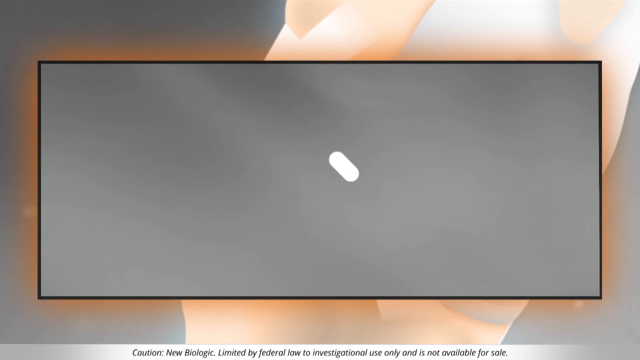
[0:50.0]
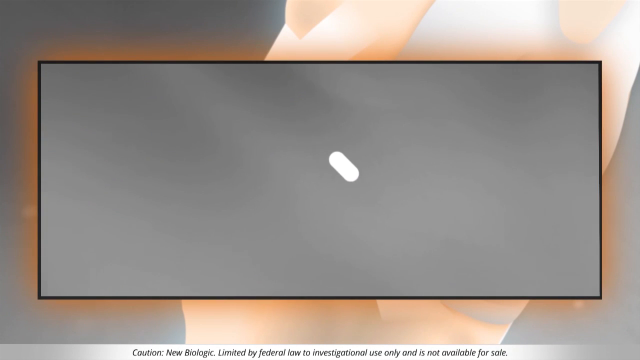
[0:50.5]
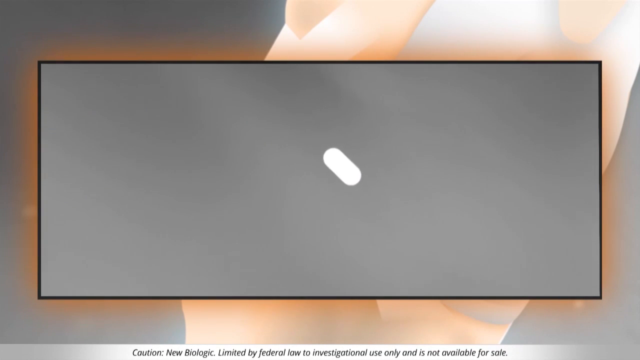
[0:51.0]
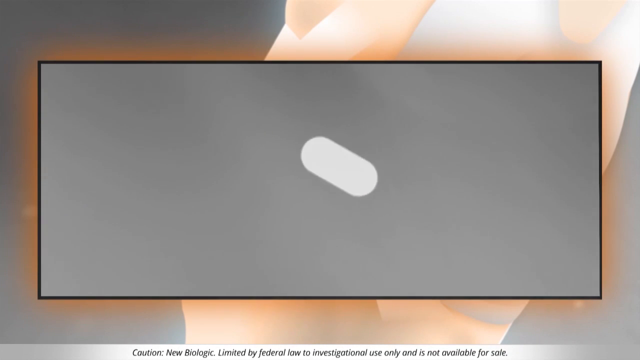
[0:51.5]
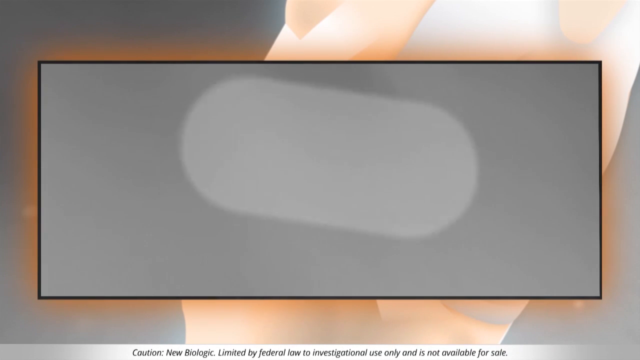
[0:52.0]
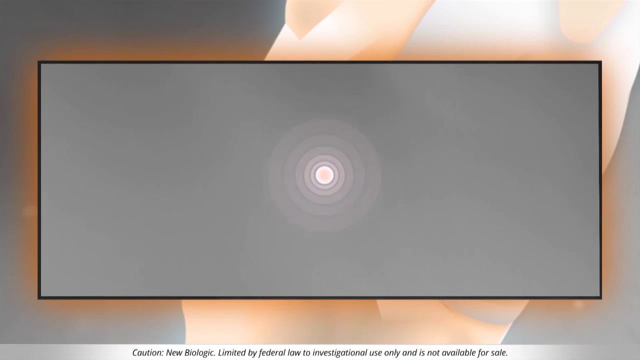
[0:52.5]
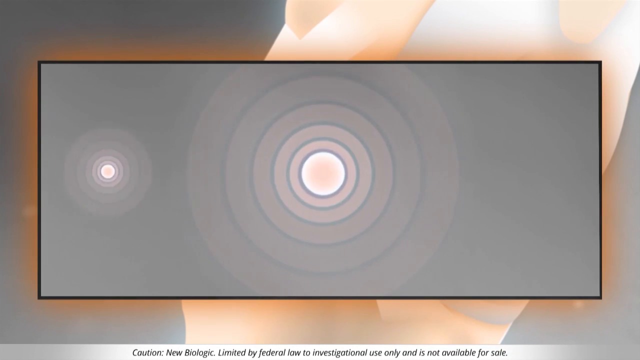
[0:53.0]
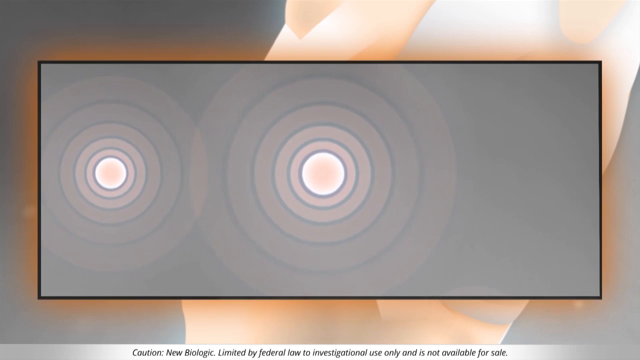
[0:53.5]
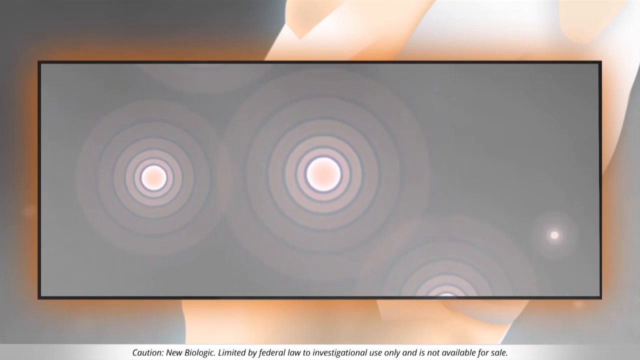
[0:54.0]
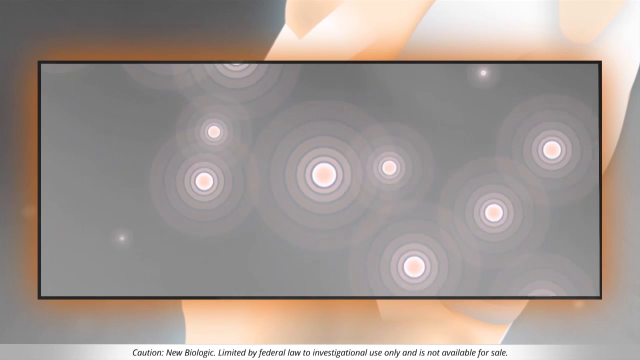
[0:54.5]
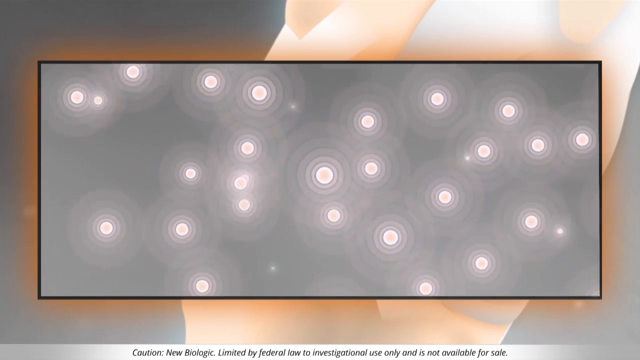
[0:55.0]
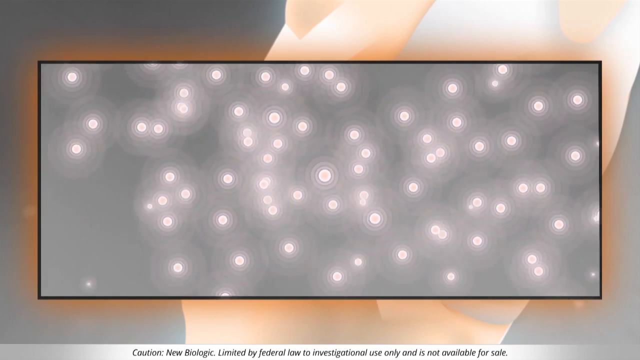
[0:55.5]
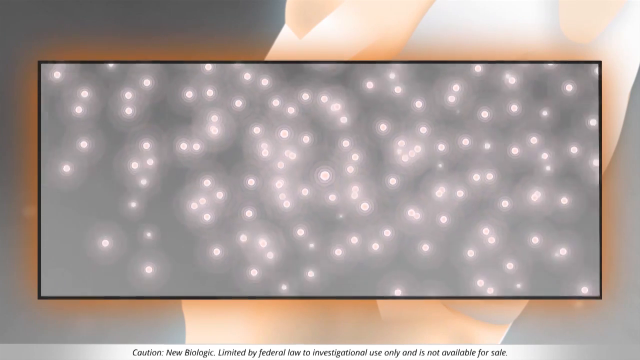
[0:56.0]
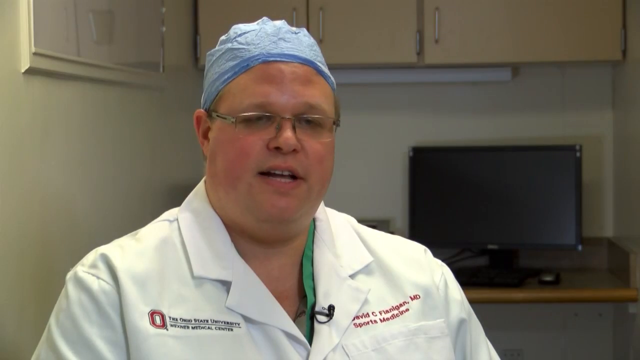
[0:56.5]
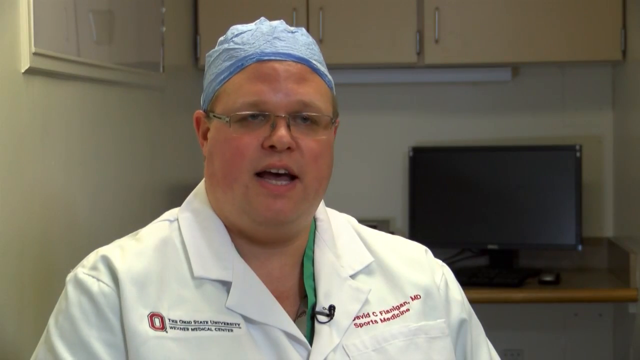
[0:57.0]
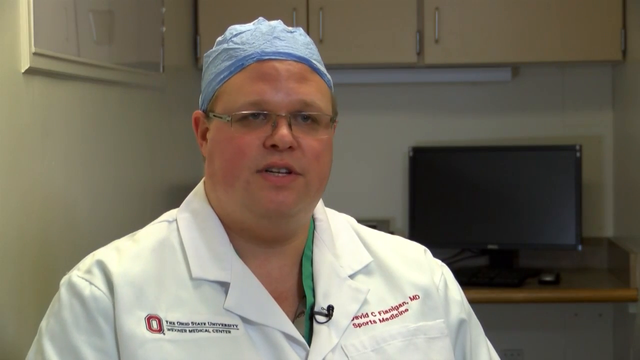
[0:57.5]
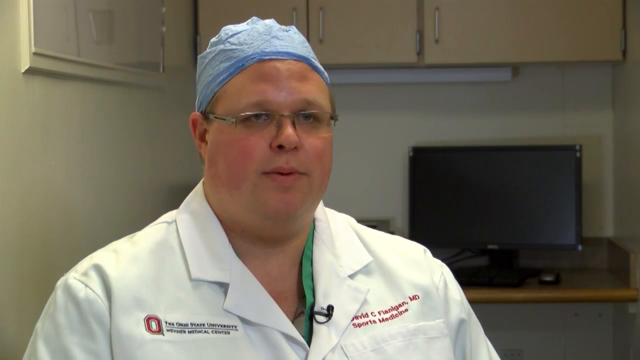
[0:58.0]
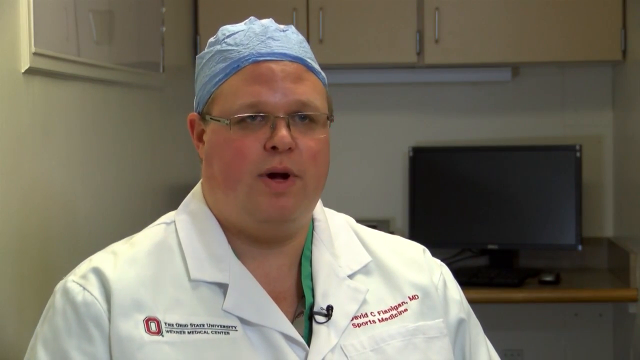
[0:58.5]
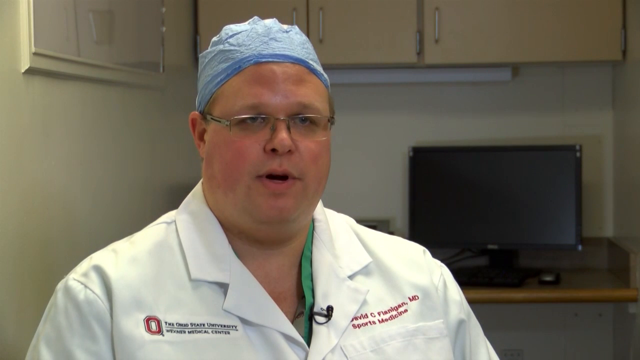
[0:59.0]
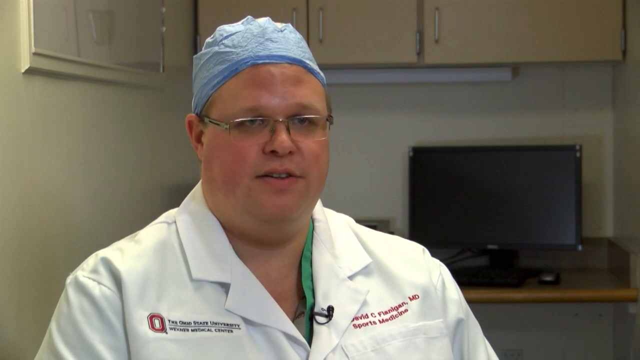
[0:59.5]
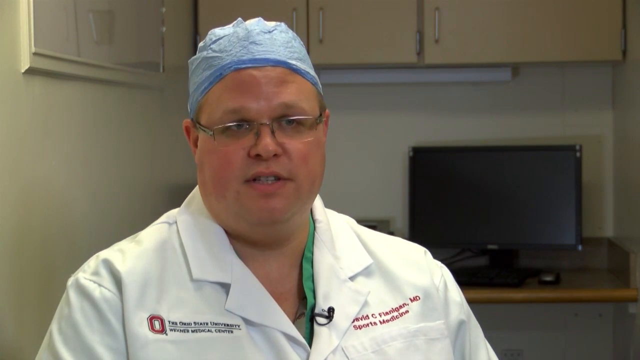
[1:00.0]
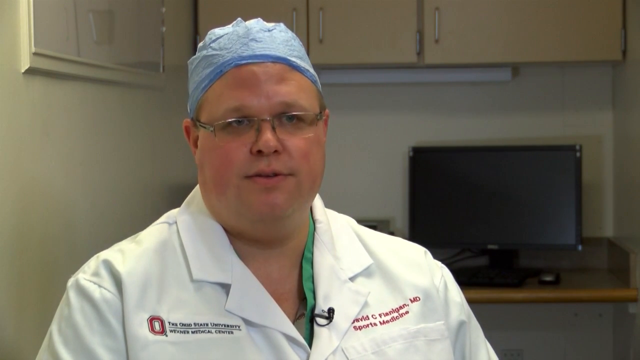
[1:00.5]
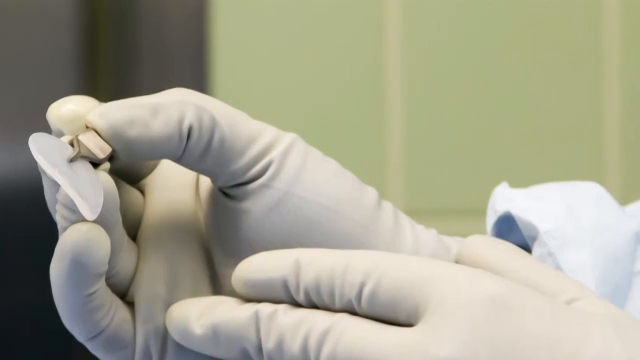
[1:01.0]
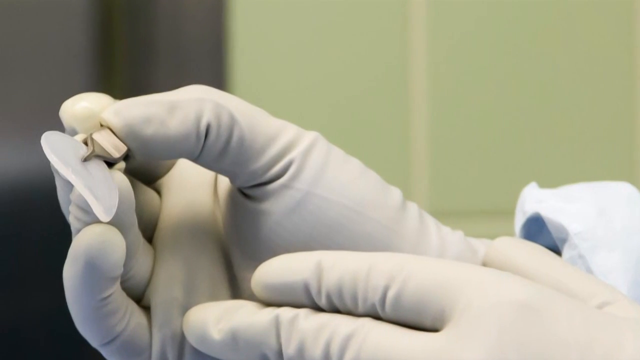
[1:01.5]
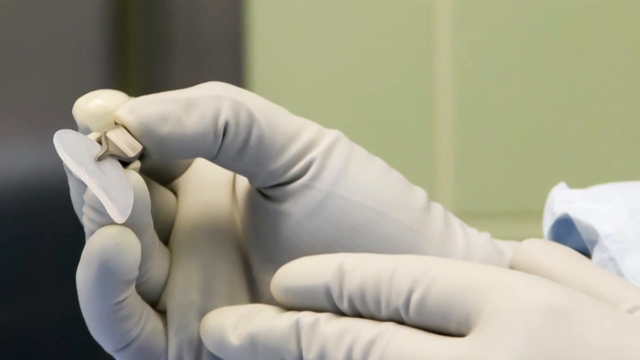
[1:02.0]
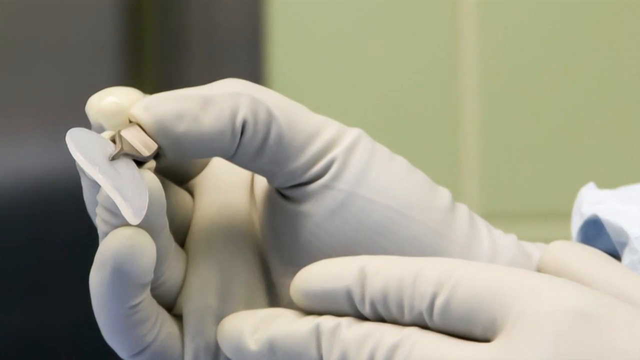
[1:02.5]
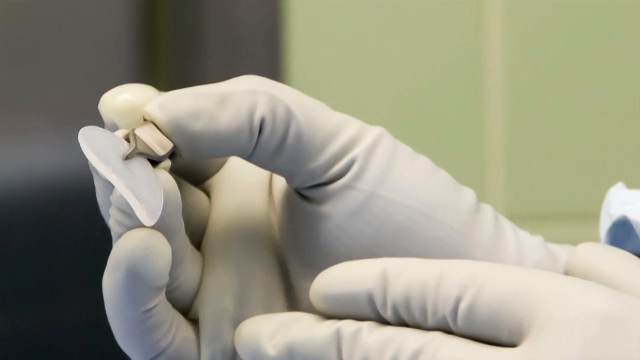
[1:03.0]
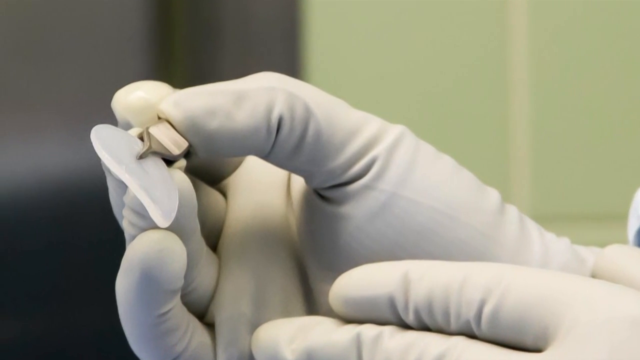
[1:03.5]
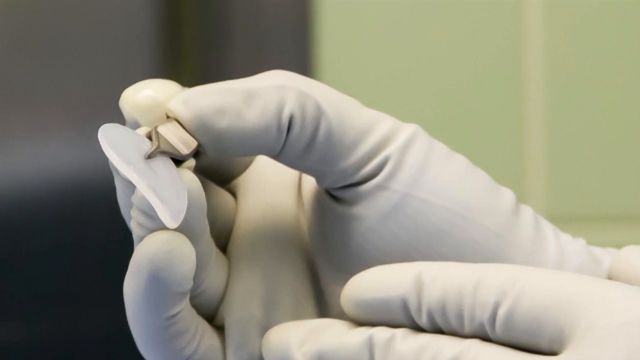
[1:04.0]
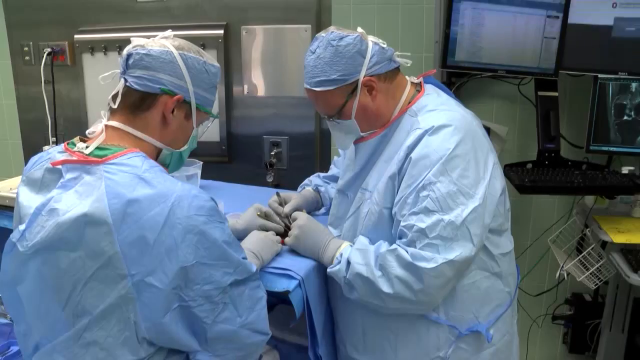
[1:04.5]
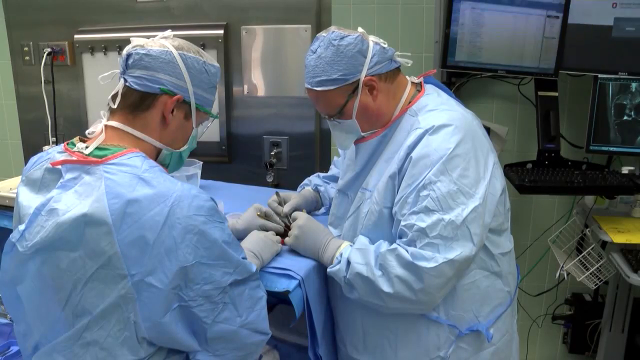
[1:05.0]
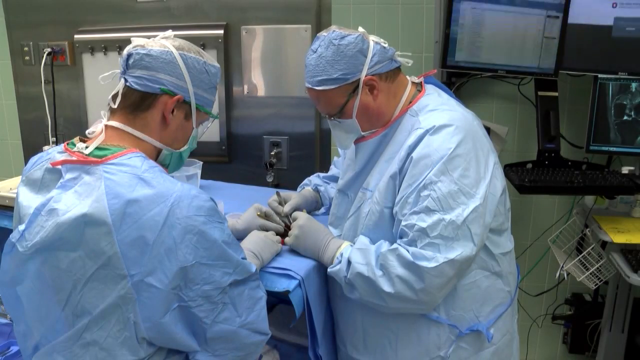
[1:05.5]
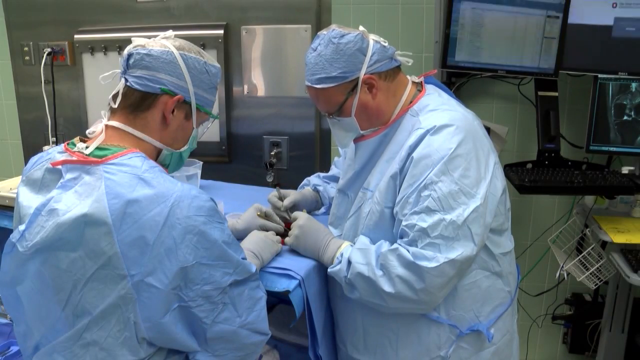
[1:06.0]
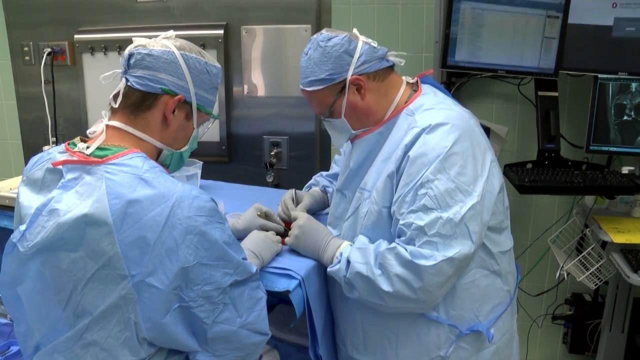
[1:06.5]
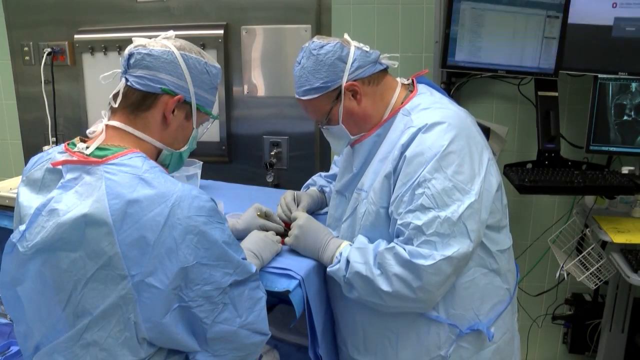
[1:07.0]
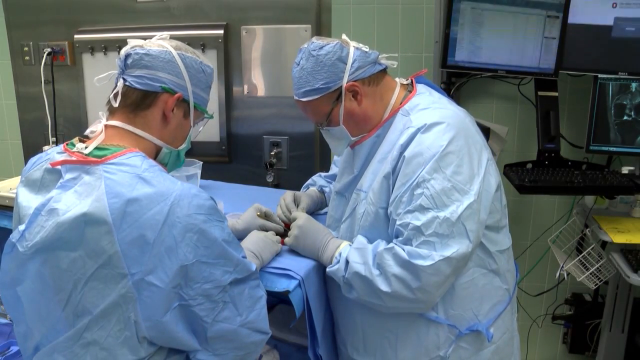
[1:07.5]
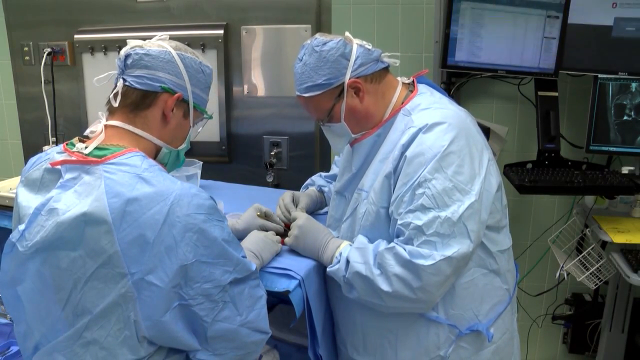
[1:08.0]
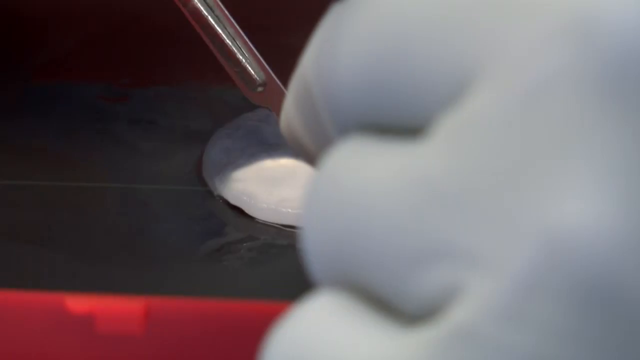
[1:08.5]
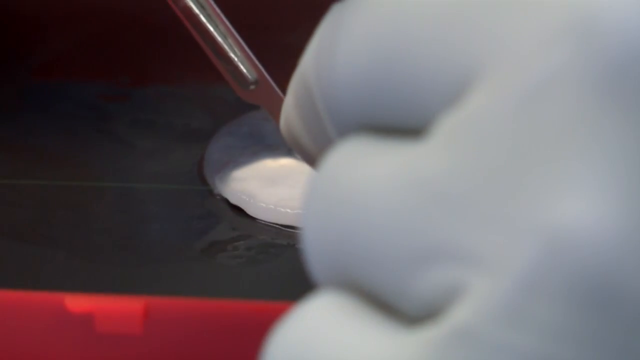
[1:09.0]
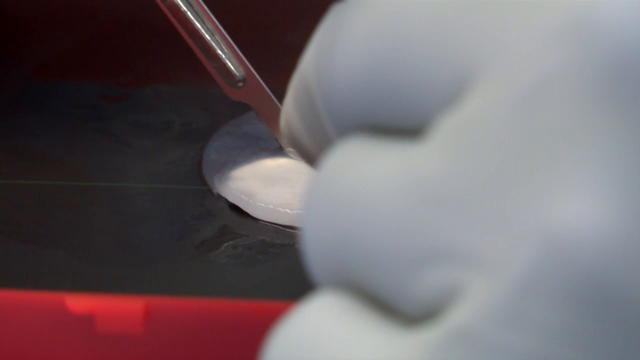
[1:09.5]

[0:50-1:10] A white tablet-shaped thing is on the screen inside a large gray box. Circles appear with other circles surrounding them, building up until only the circles can be seen. The image changes back to the doctor, who shakes his head as he speaks and then nods. Next, an extreme close-up shows a gloved right hand holding forceps that hold a white circle; only the hand, the forceps and the circle are visible. The surgical scene appears again: the doctor who was interviewed earlier is stood in the middle of the screen in full scrubs, and to his left is a doctor or nurse, also in full scrubs. Both have their hands leaning over something, though it is not clear what. The one on the left has her left hand at the top and right hand at the bottom; the doctor on the right has both hands together, touching her hands. The view then zooms in on the circle that was held in the forceps, now in the middle of the table.